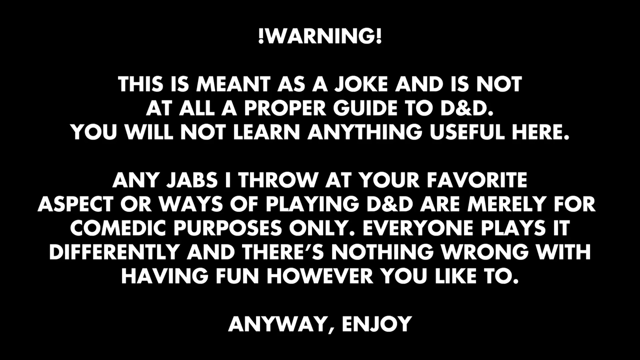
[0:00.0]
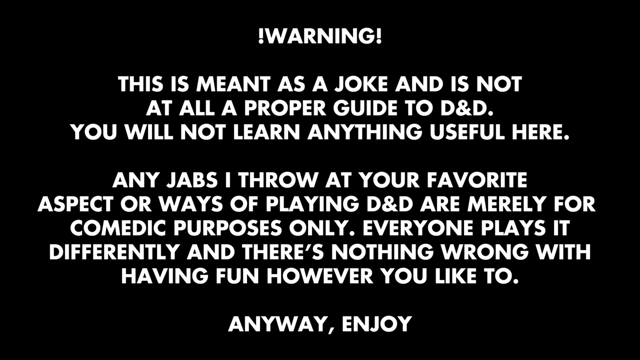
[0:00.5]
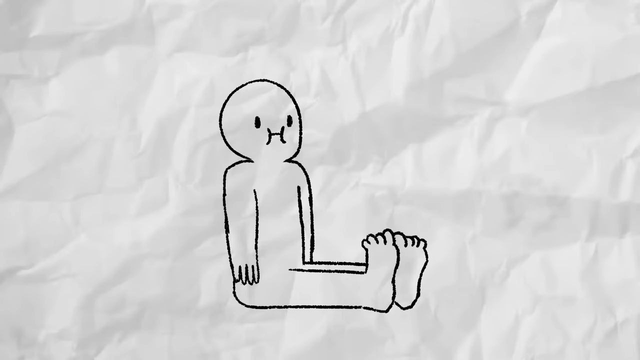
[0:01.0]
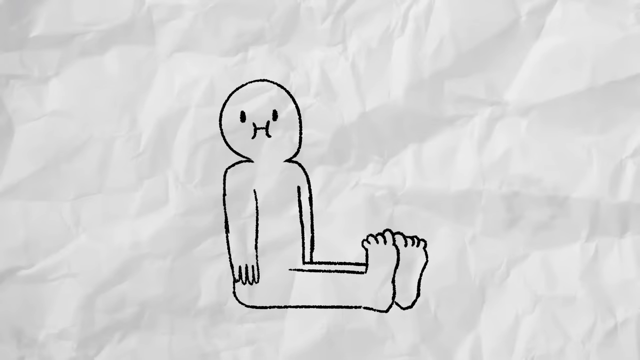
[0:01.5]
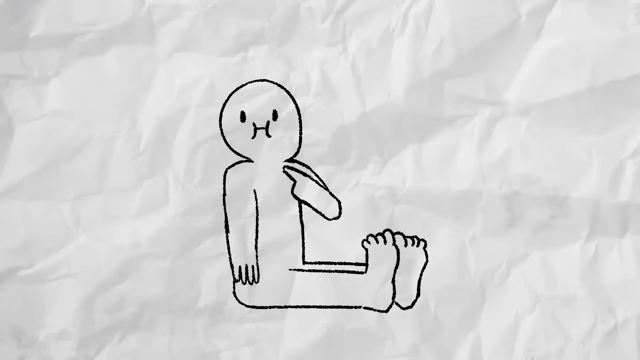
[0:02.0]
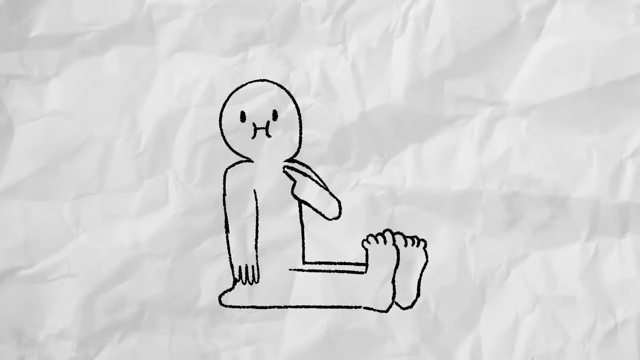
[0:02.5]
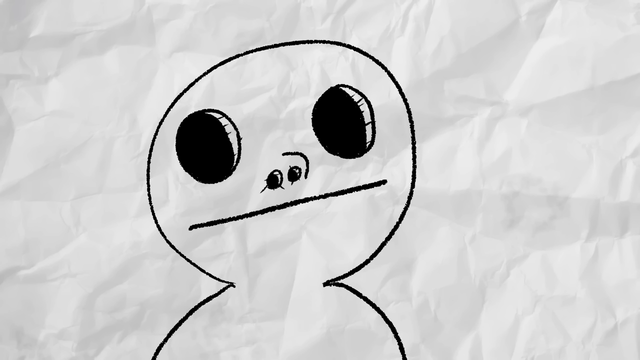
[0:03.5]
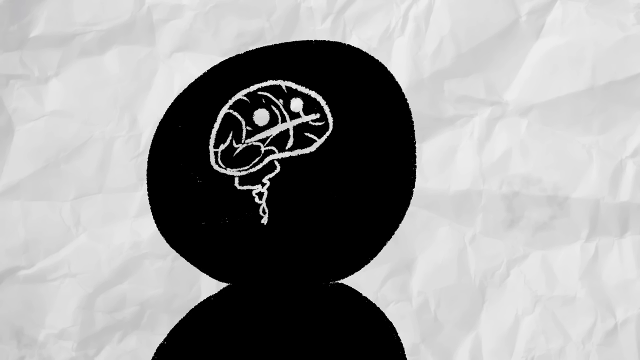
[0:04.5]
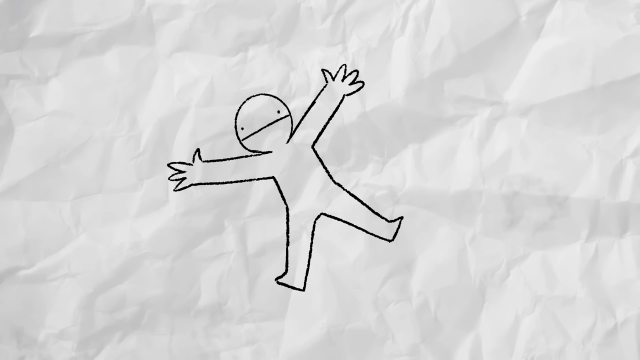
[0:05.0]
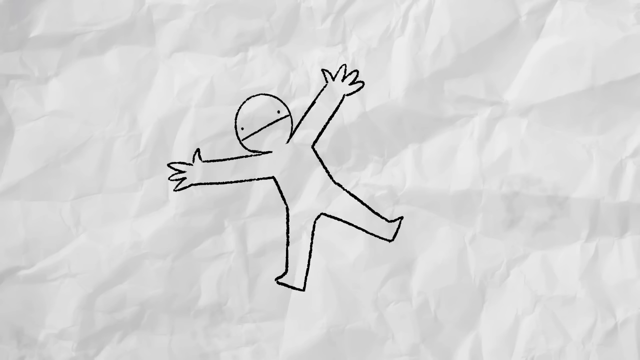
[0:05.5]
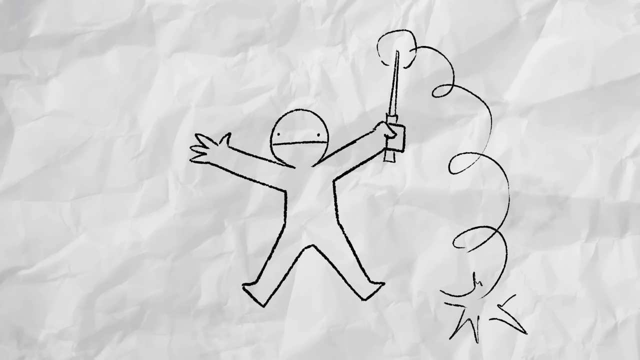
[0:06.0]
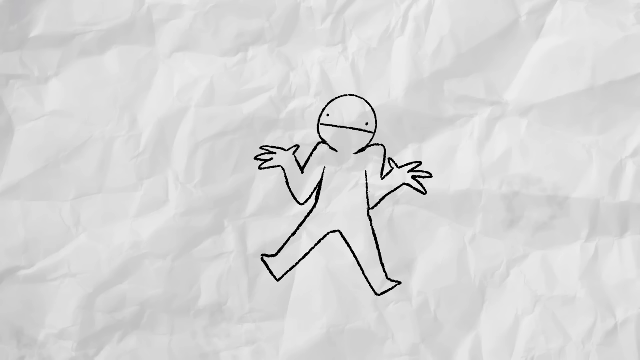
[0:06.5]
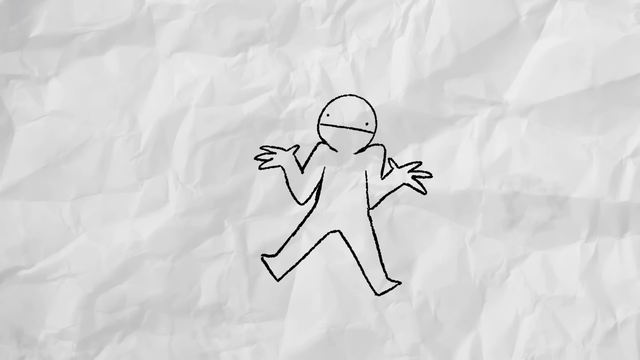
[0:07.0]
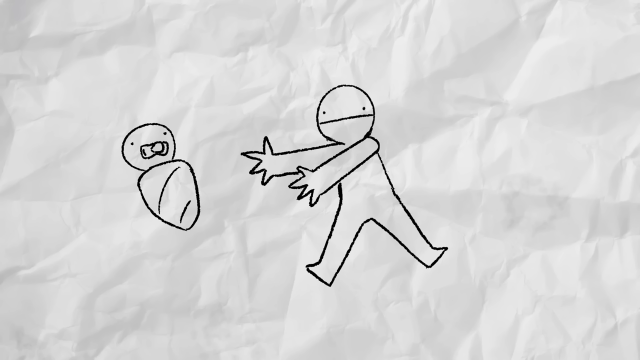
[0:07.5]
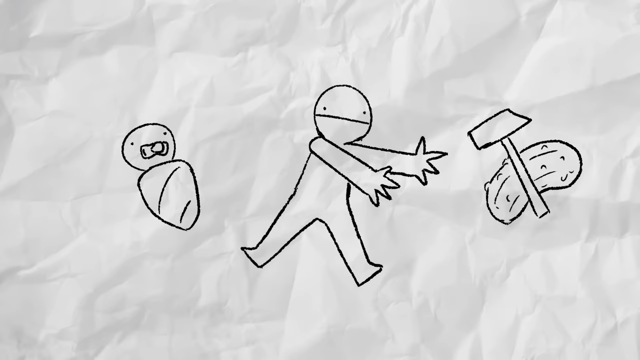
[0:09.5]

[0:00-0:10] The video opens on a black background with white text reading "Warning: this is meant as a joke and it's not at all proper guide to D&D, you will not learn anything useful here", adding that any jab at your favorite aspect or way to play D&D is merely for comedic purposes, "everyone plays it differently. There's nothing wrong with having fun however you like to. Anyway, enjoy the video." It then moves into an animation on a white crumpled background, with stick-figure drawings of multiple situations and babies. The video seems to be about D&D.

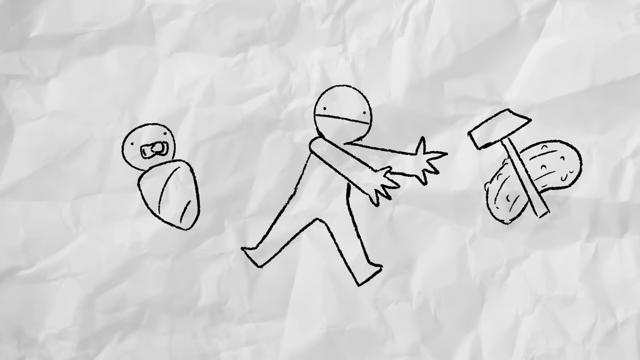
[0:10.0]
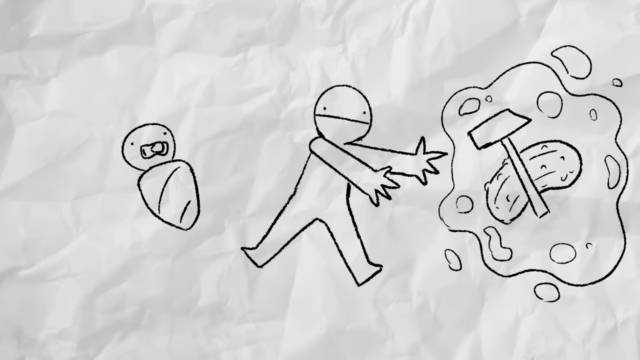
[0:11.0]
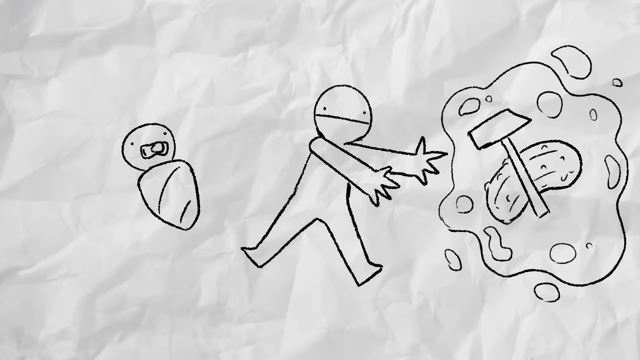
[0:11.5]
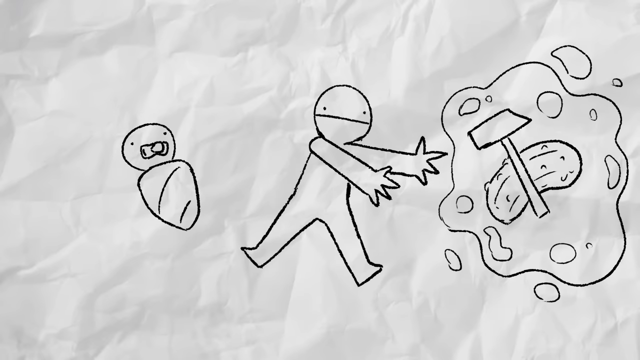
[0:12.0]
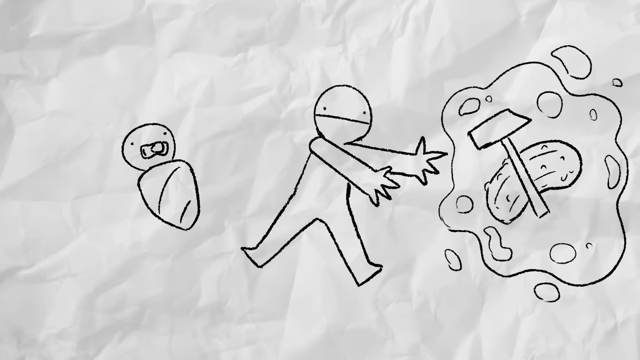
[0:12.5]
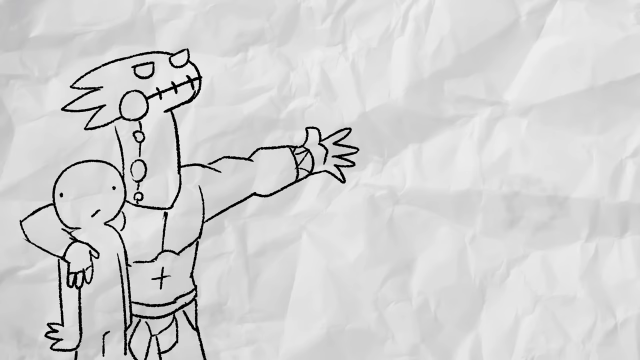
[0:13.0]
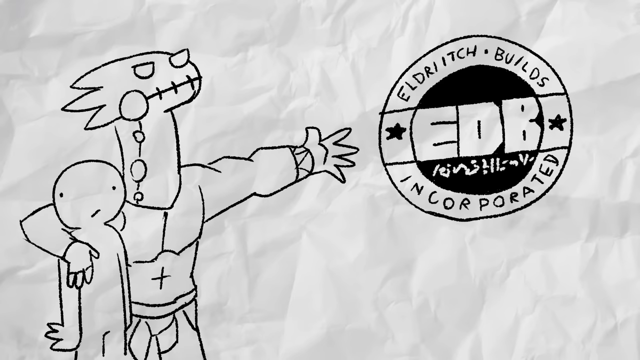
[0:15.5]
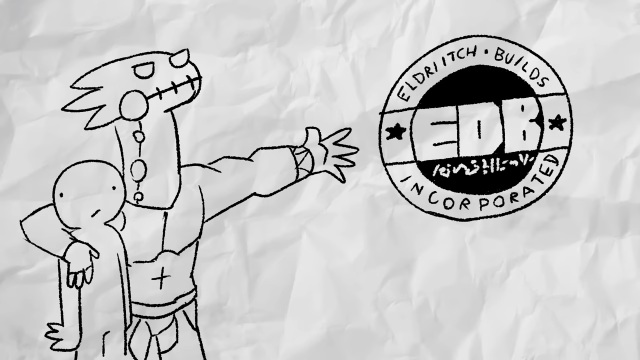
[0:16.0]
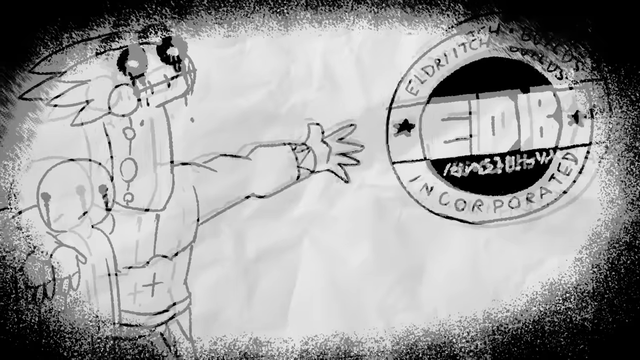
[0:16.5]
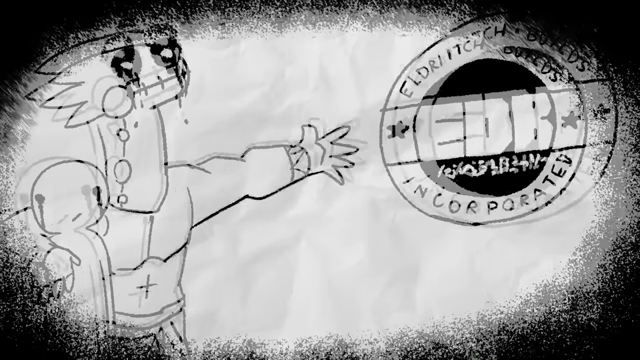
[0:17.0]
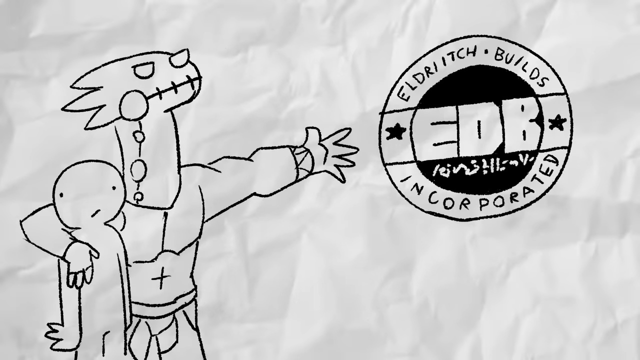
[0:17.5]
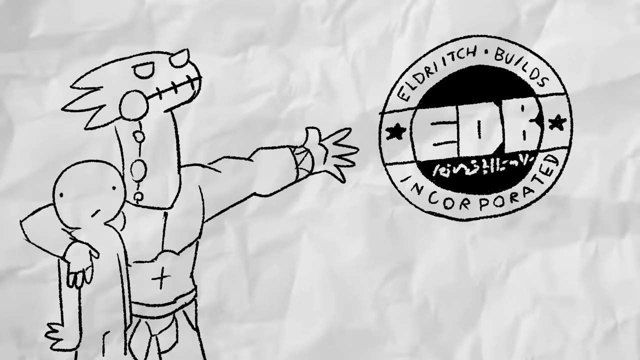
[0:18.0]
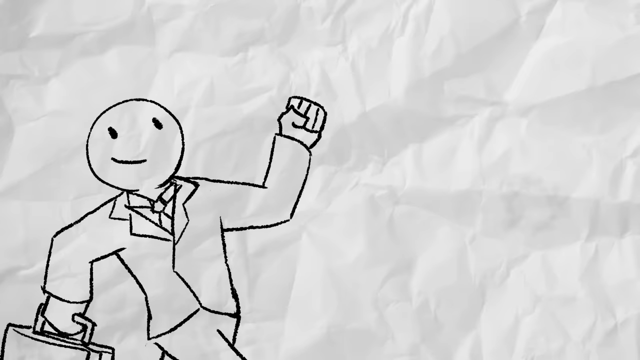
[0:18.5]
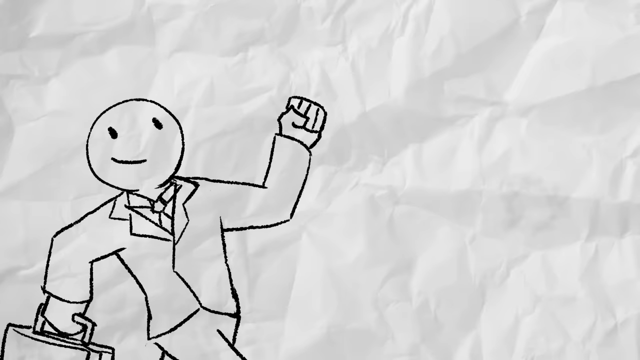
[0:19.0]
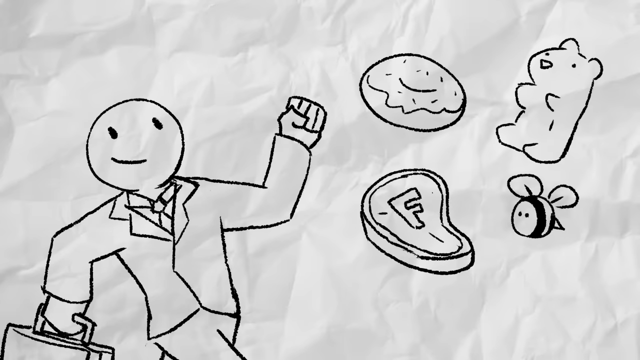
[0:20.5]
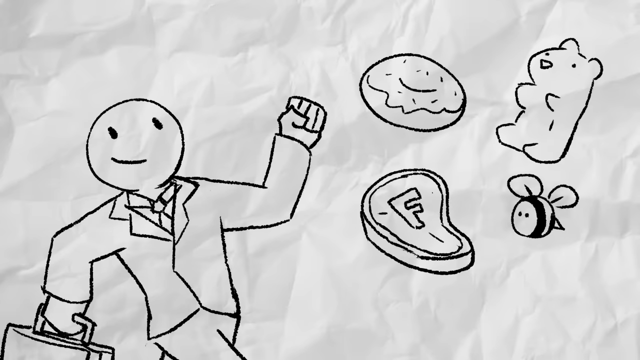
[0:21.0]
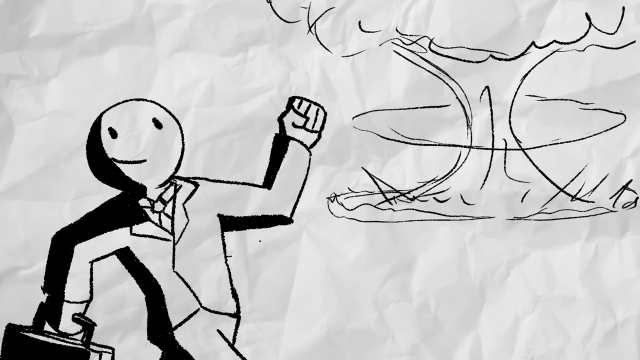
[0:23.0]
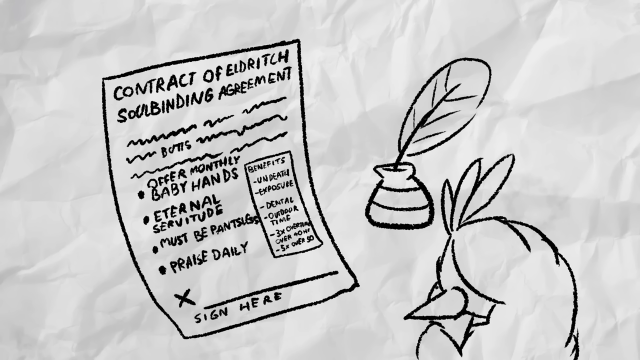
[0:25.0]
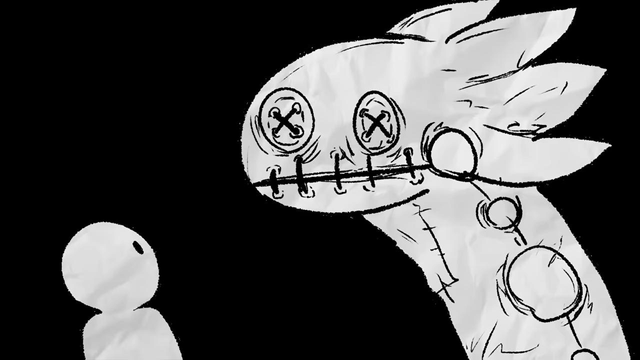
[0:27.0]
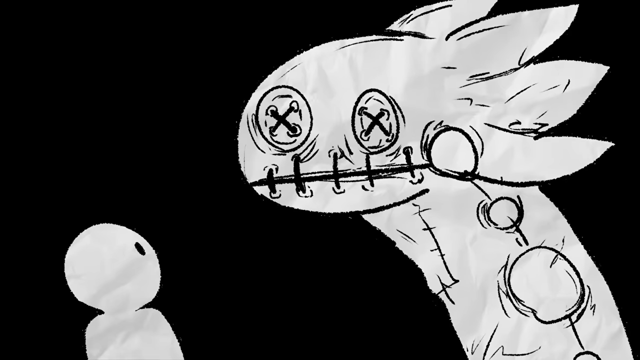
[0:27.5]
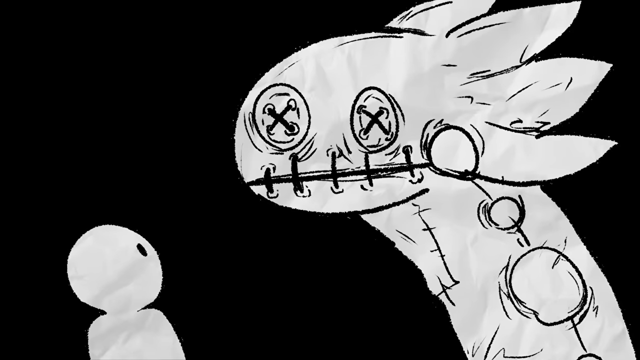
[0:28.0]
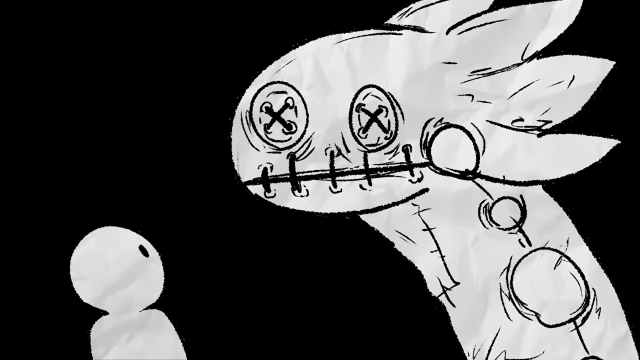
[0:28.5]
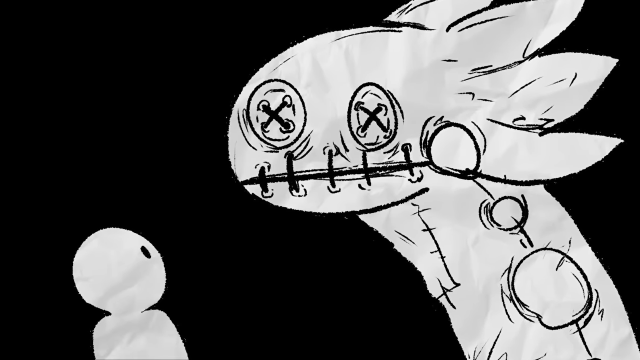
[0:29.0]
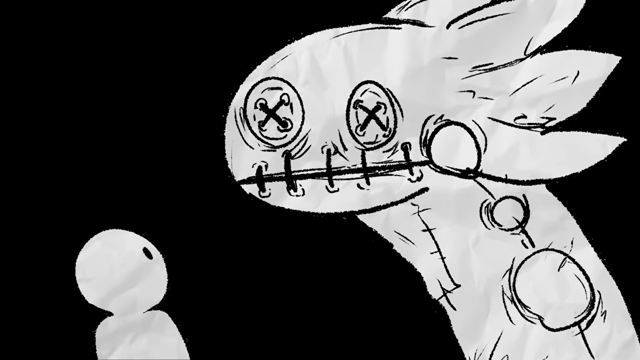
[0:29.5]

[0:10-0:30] The animation shows a black stick-figure drawing, with what looks like a baby to his left and something like a potato and a shovel to his right. He appears to move to his right toward one potato with his arm stretched toward it. The potatoes look like they are growing. A superhero figure then appears with the text "Eldritch Builds Incorporated", which seems to be a logo or intro animation. Many different characters follow, including monsters, and what look like documents he is looking at. The animation plays out a story in which he seems to progress through life, showing different instances of his life in a pencil-drawing style. The background looks like a crumpled white piece of paper being drawn on.